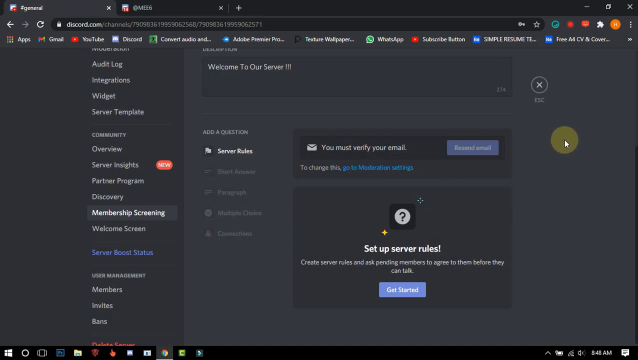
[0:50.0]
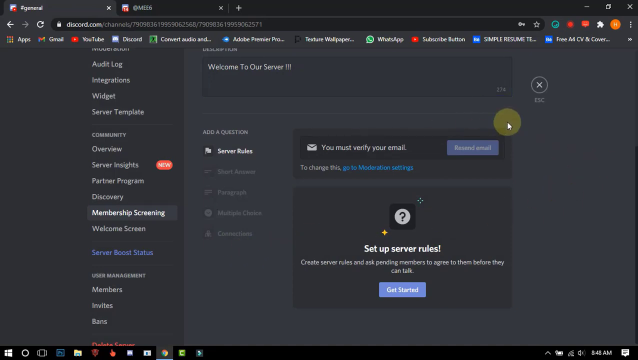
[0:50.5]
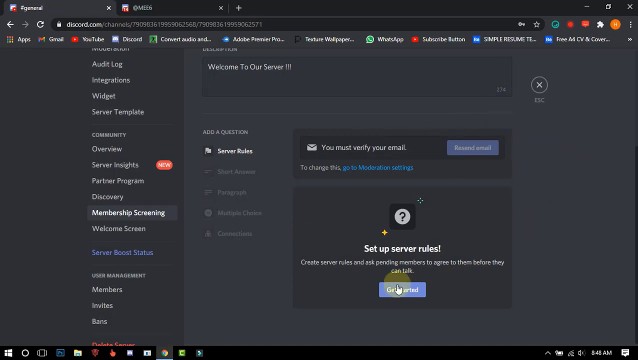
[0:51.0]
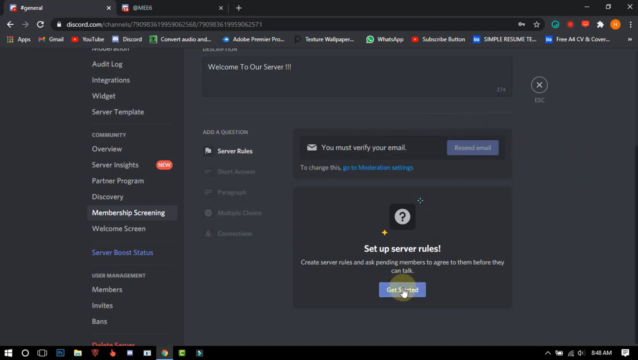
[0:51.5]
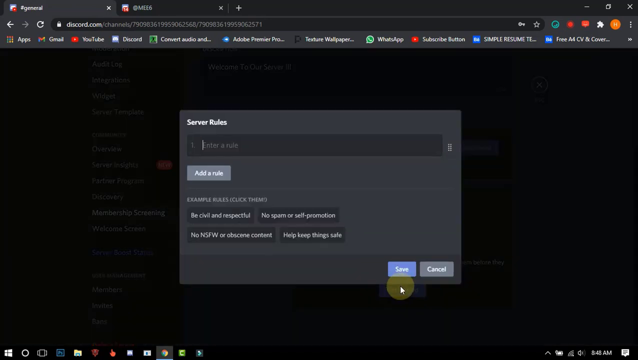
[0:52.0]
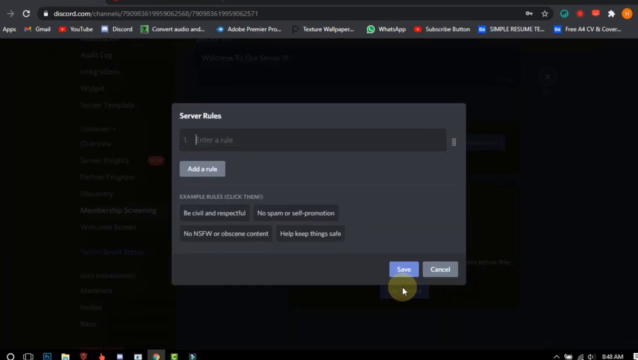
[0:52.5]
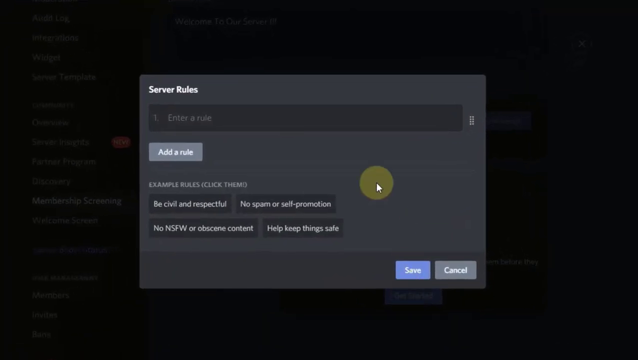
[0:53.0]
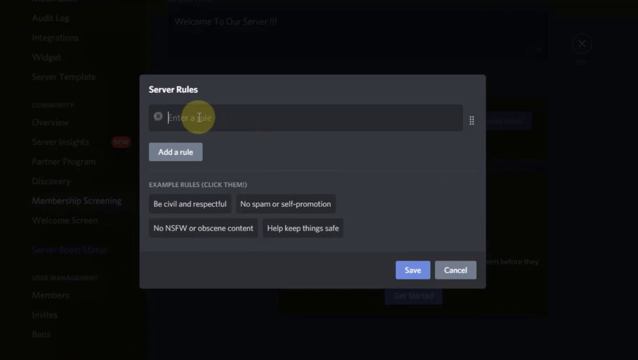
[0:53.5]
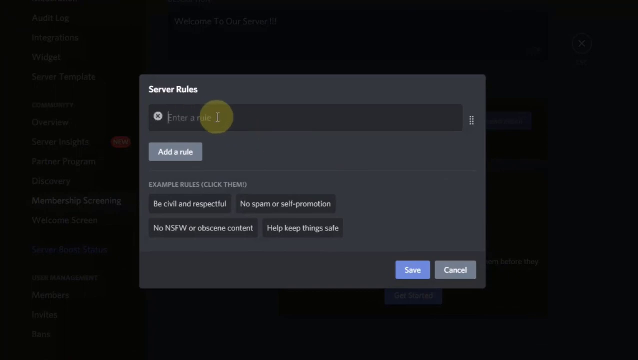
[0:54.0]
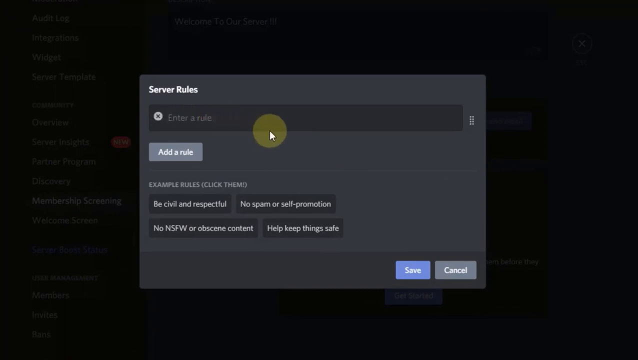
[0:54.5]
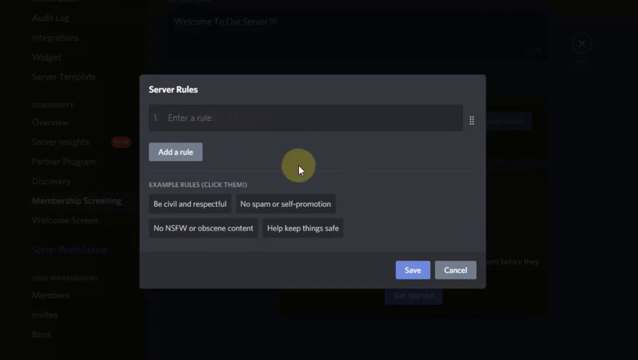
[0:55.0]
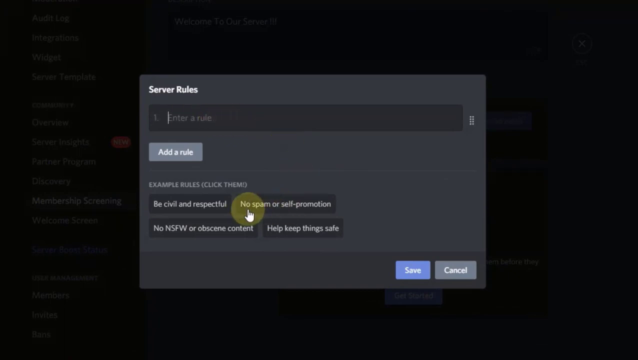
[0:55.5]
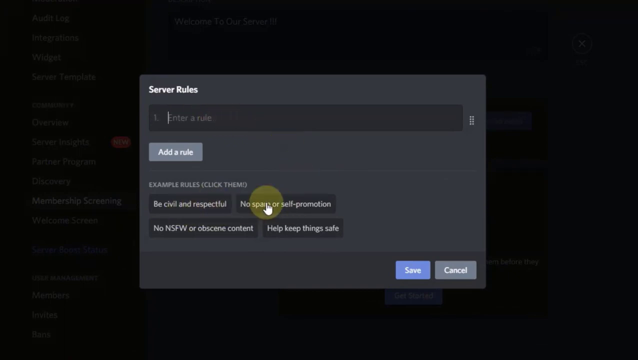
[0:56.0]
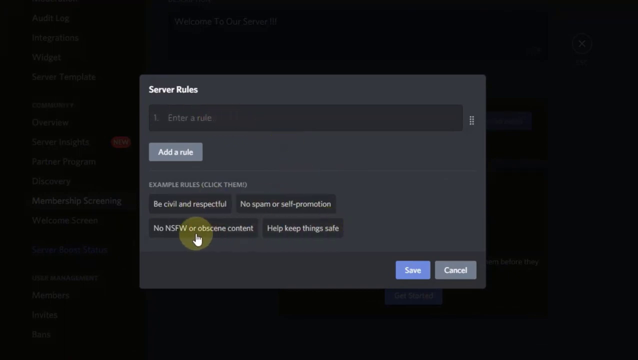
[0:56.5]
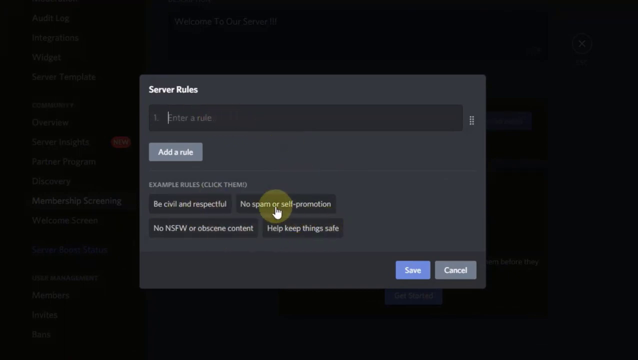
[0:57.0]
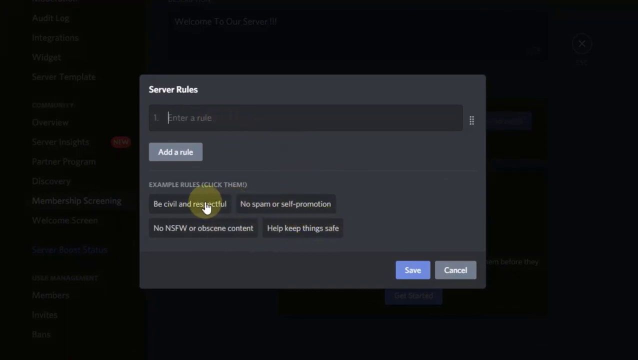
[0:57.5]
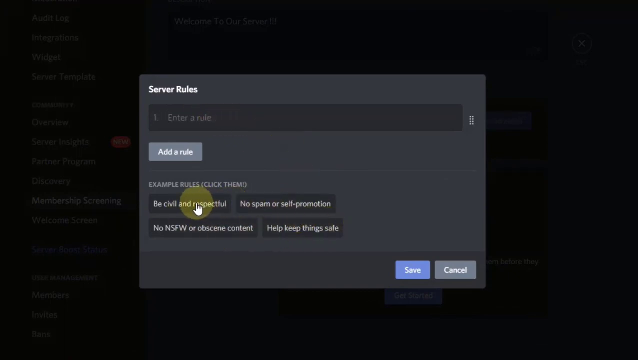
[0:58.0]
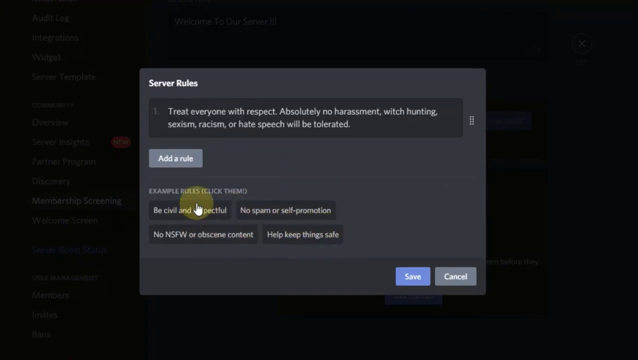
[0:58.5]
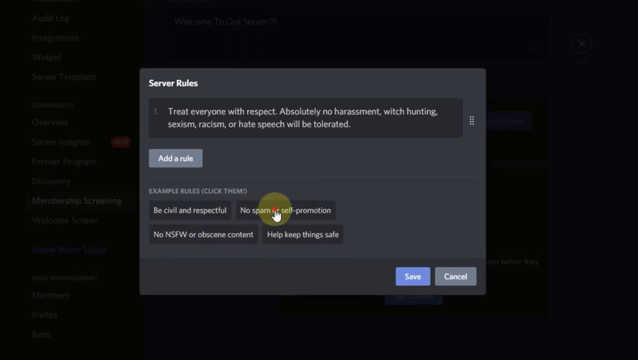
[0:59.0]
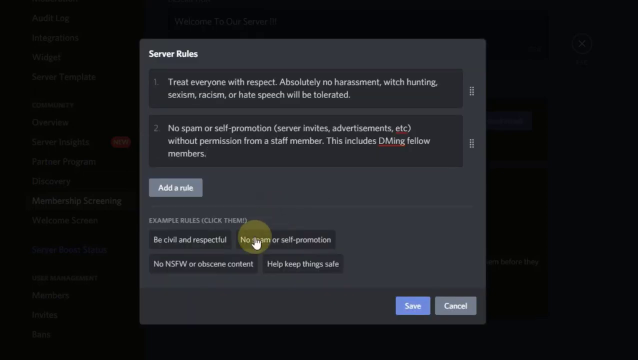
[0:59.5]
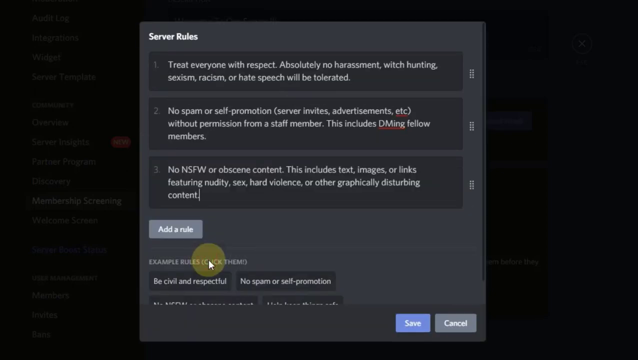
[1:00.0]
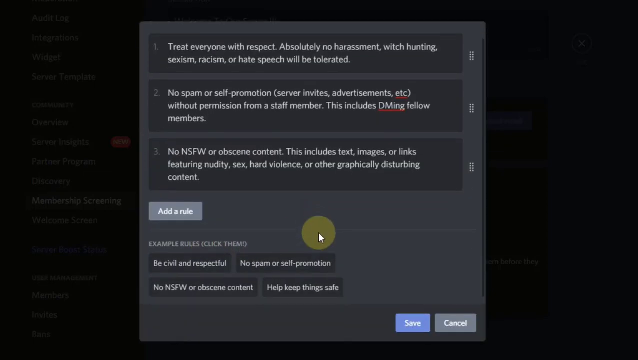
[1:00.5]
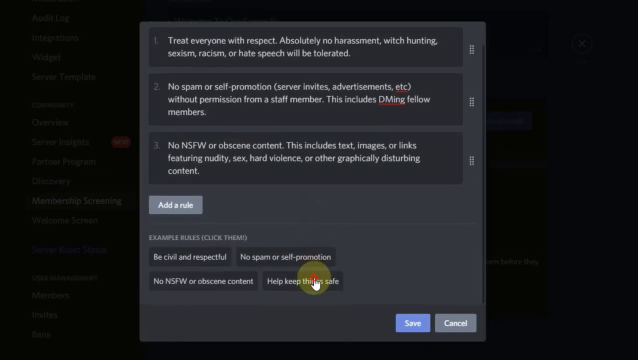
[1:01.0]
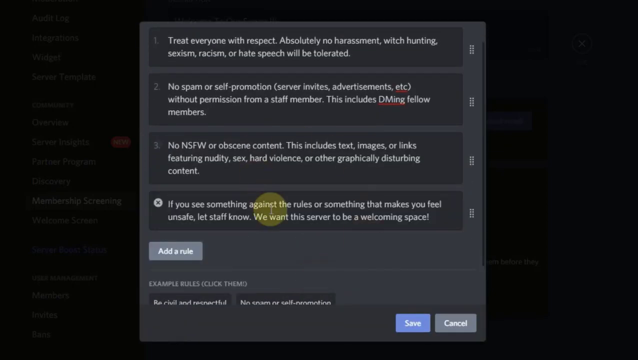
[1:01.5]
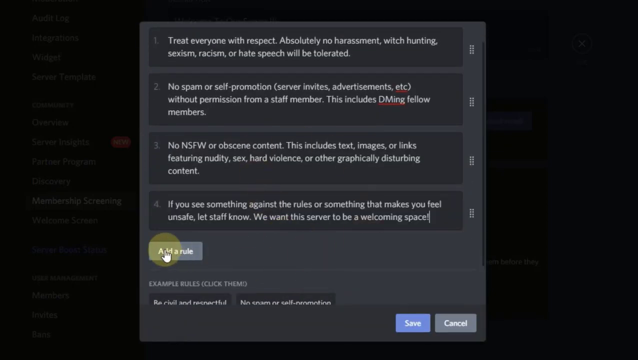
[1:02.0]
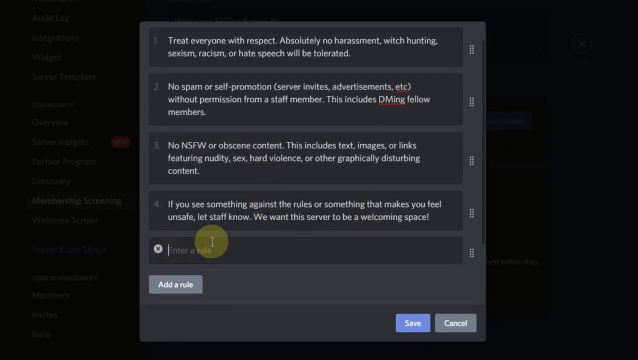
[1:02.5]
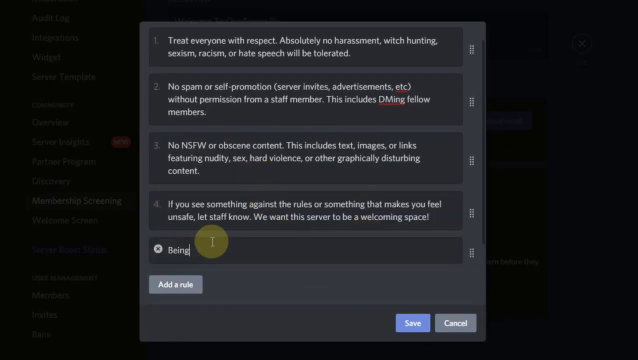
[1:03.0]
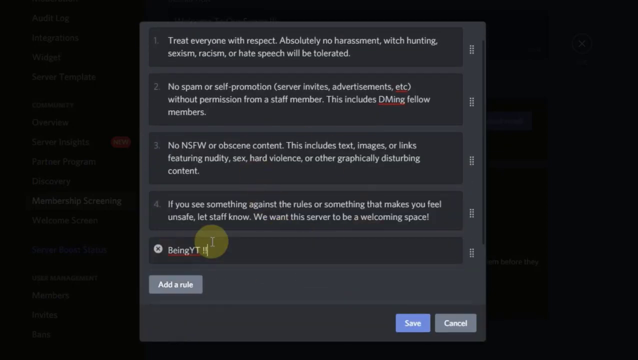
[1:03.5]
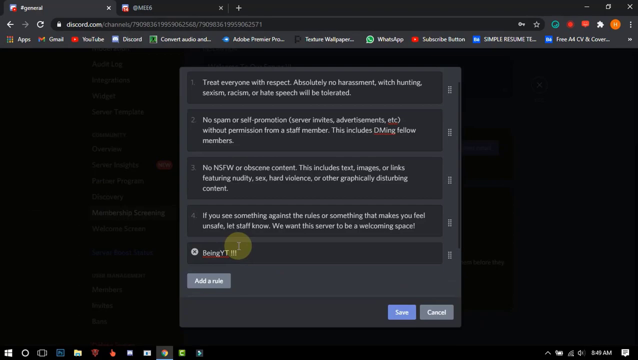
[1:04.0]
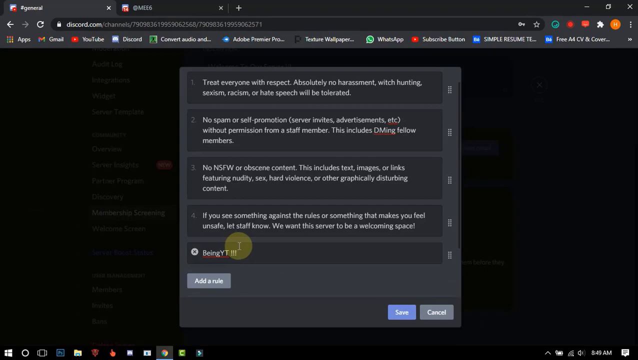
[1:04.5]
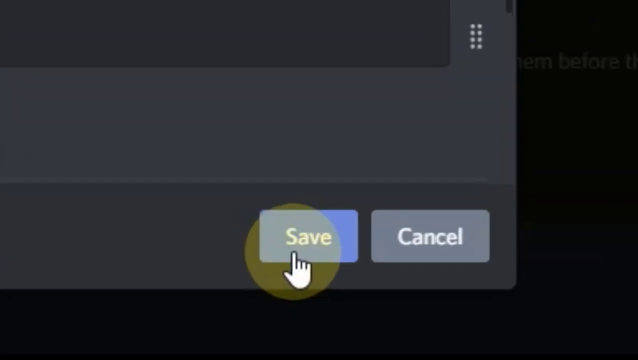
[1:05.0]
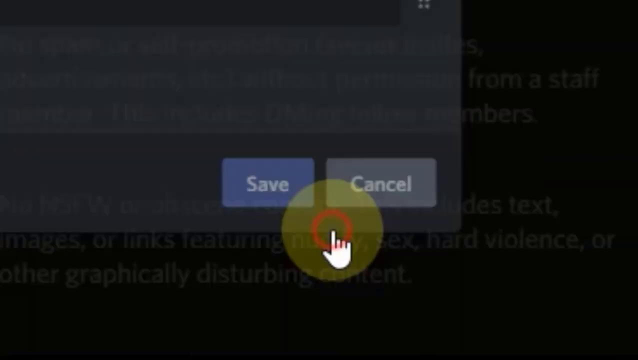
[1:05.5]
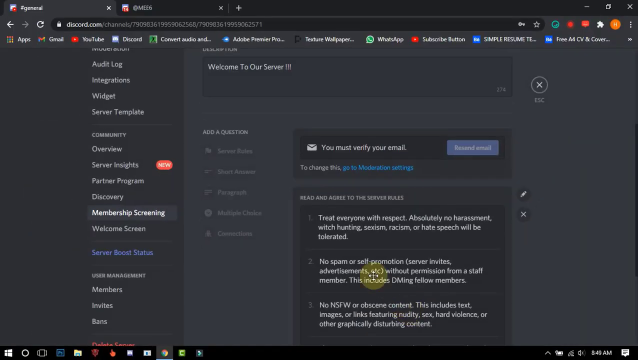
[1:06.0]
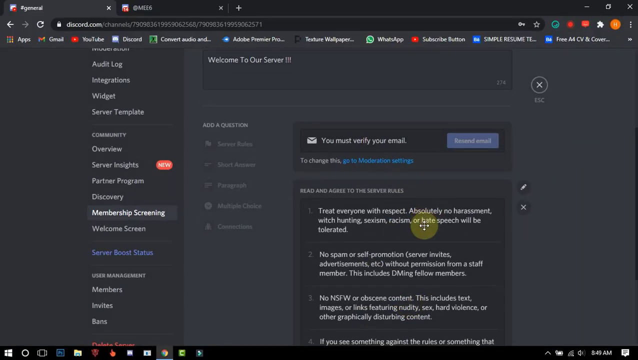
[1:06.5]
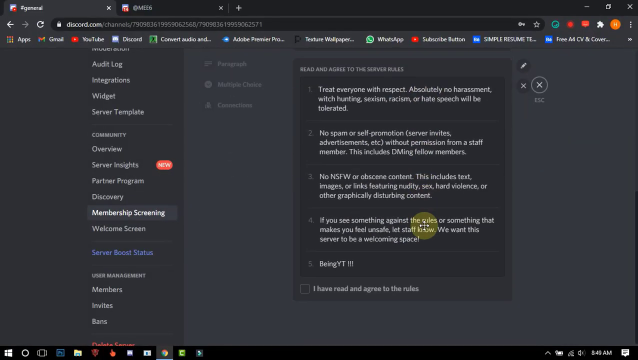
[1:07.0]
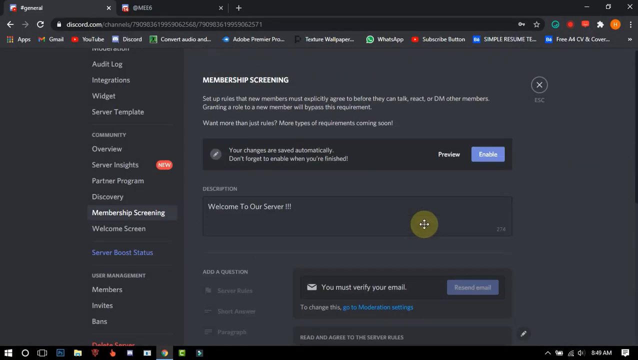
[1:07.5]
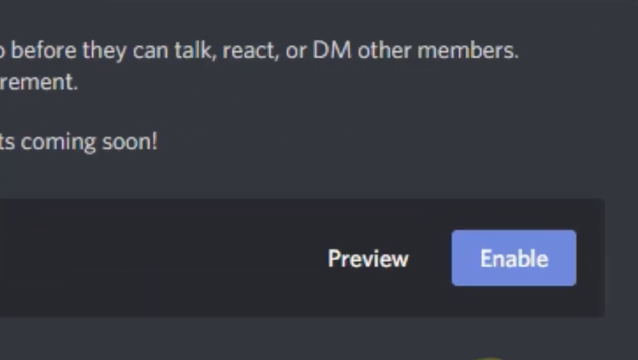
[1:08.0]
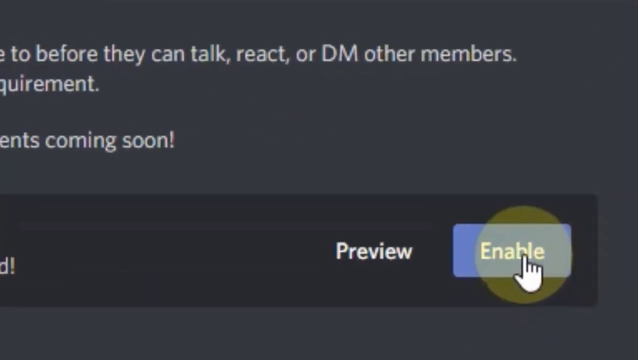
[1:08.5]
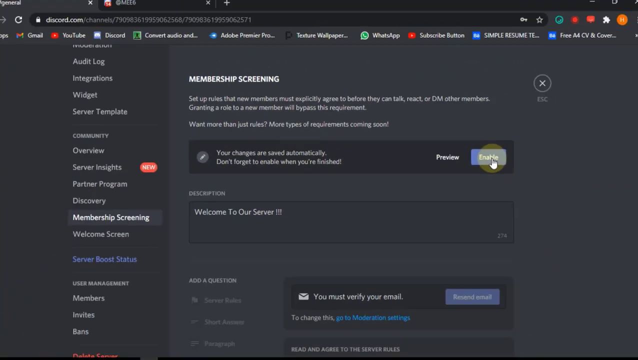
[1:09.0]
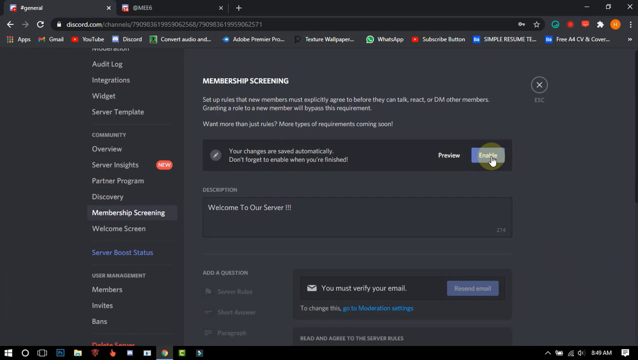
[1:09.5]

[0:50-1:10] The Discord server's Membership Screening settings are open, with the server rules option selected. The user selects the blue "get started" button underneath text reading "set up server rules" and "create server rules and ask pending members to agree to them before they can talk." A pop-up appears and the camera zooms in on it. The pop-up is titled "server rules" and has a text box with a clickable button below that says "add a rule". Below that are clickable examples: "be civil and respectful", "no spam or self-promotion", "no NSFW or obscene content", and "help keep things safe". The user selects the text box and the first example, which puts "treat everyone with respect, absolutely no harassment, witch hunting, sexism, racism, or hate speech will be tolerated" into the text box. Clicking the second example creates a second rule beginning "no spam or self-promotion" and including "This includes DMing fellow members." The third rule reads "no NSFW or obscene content. This includes text messages or links featuring nudity, sex, hard violence, or other graphically disturbing content." The fourth example brings a box reading "if you see something against the rules or something that makes you feel unsafe, let staff know. We want this server to be a welcoming space." The user then clicks the add a rule button, which brings up another text box, and types "being yt!!!!". The view zooms into a blue clickable button that reads "enable", and the user selects it, enabling the rules on the server.